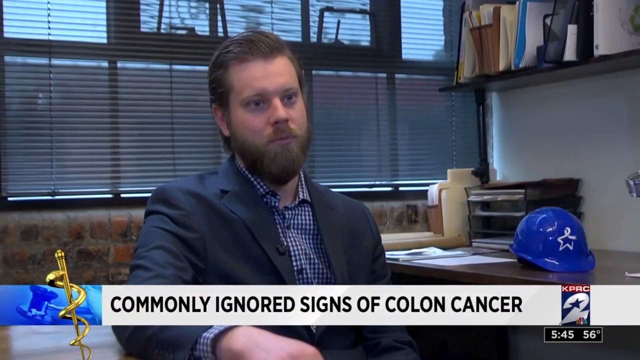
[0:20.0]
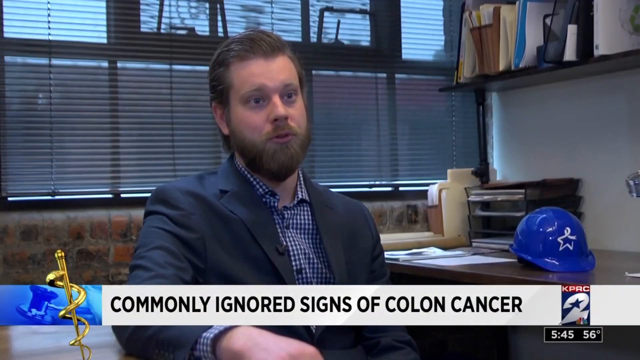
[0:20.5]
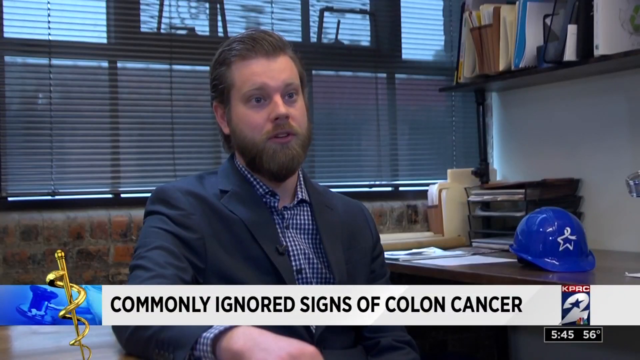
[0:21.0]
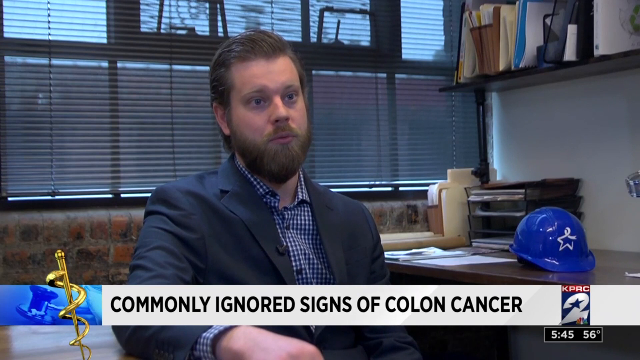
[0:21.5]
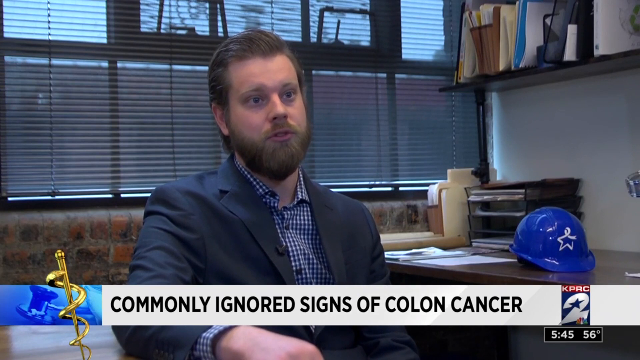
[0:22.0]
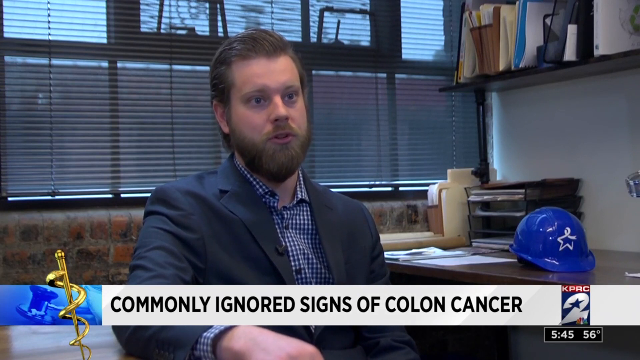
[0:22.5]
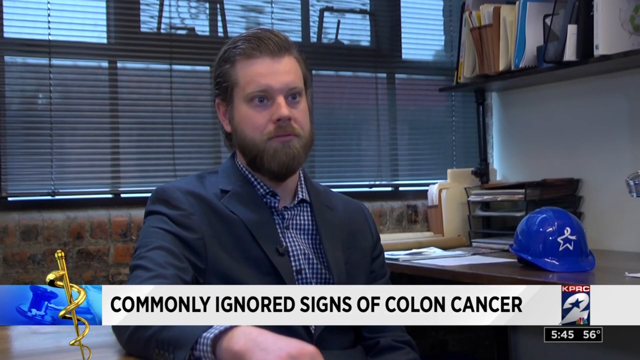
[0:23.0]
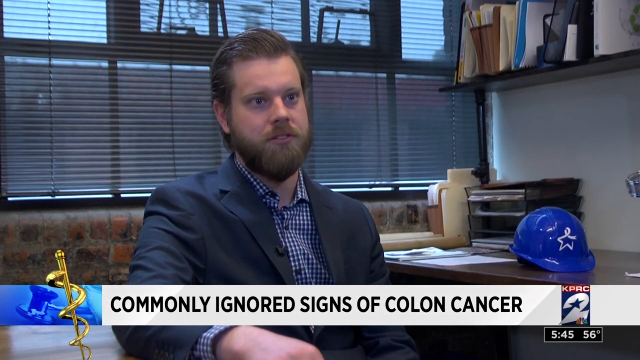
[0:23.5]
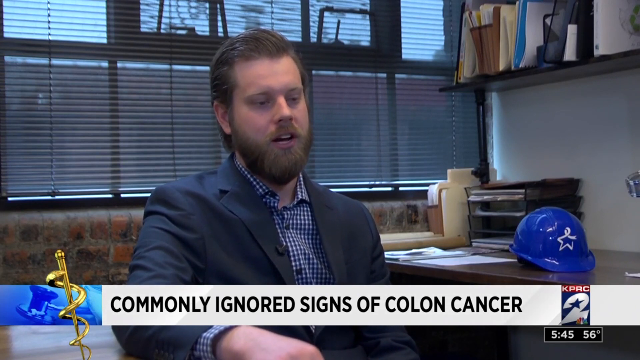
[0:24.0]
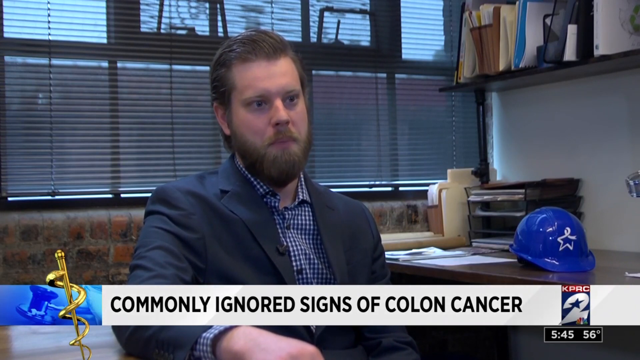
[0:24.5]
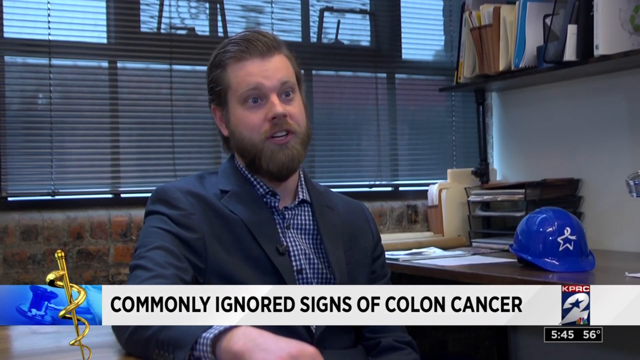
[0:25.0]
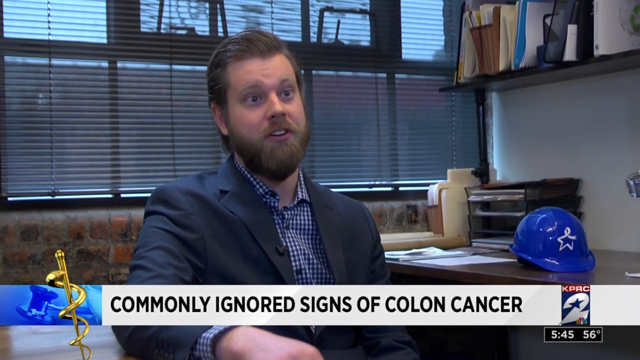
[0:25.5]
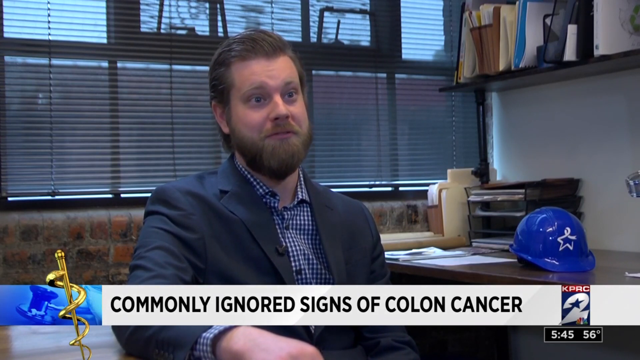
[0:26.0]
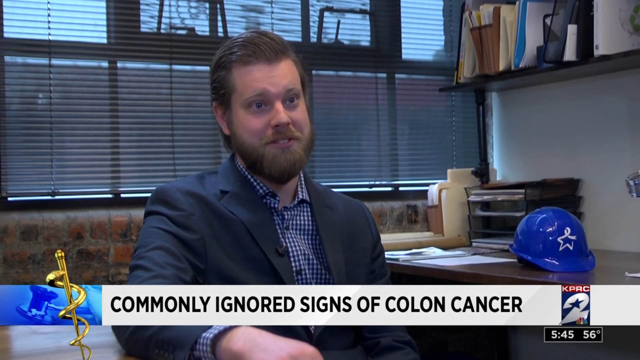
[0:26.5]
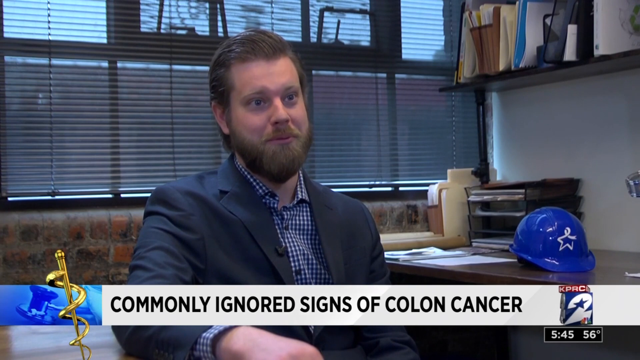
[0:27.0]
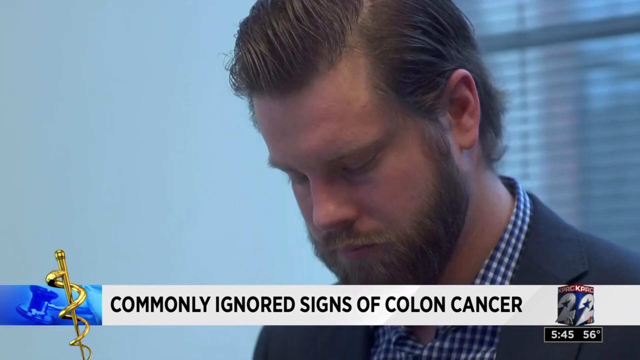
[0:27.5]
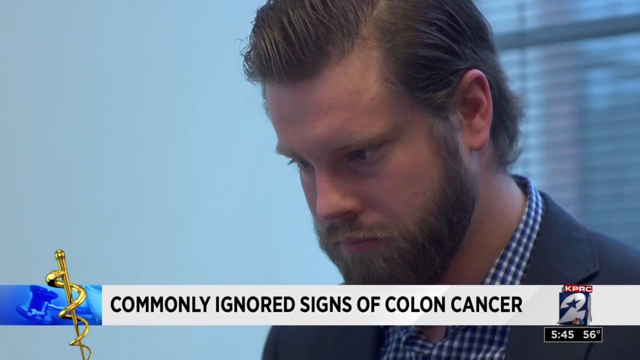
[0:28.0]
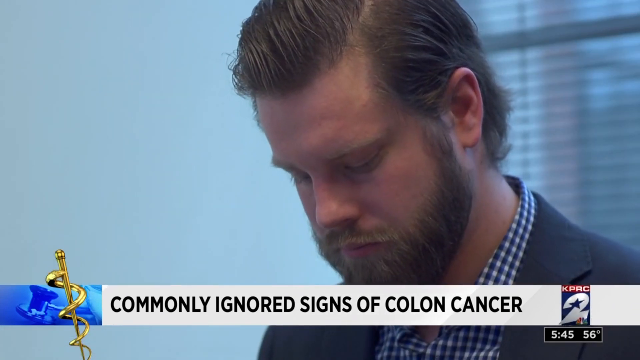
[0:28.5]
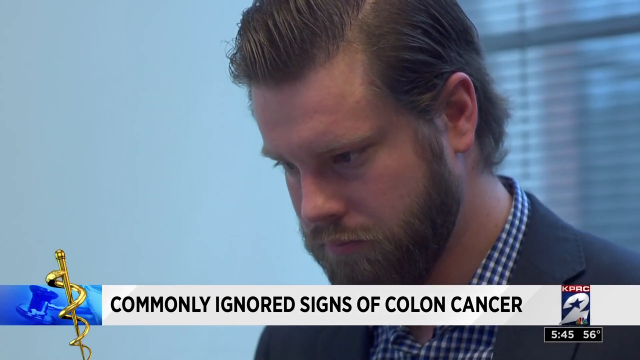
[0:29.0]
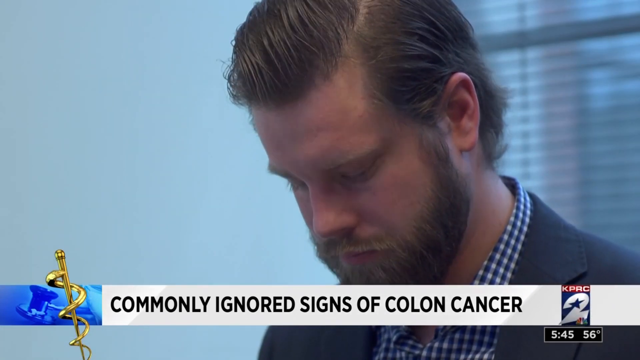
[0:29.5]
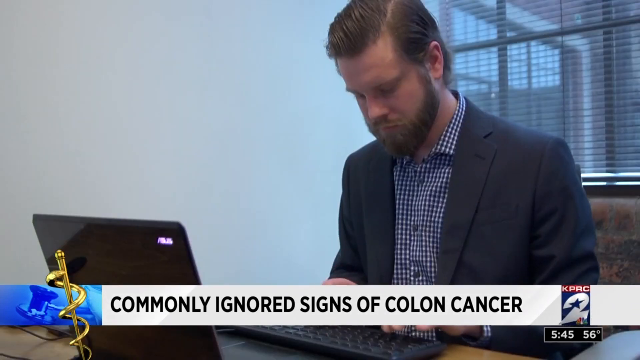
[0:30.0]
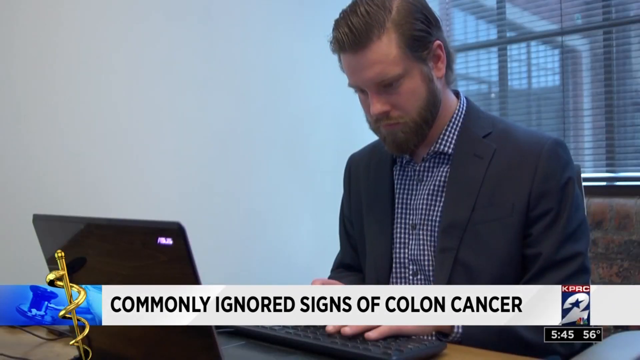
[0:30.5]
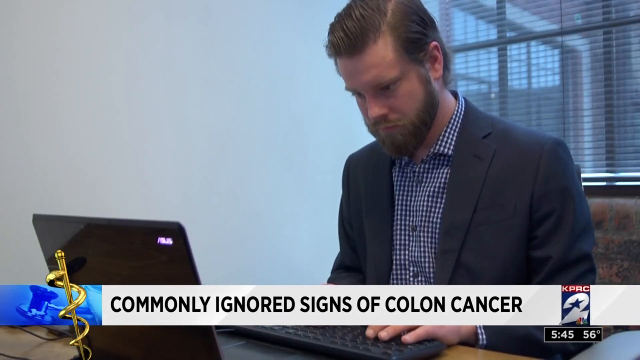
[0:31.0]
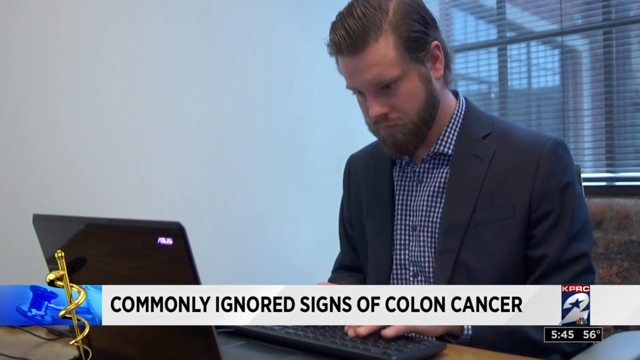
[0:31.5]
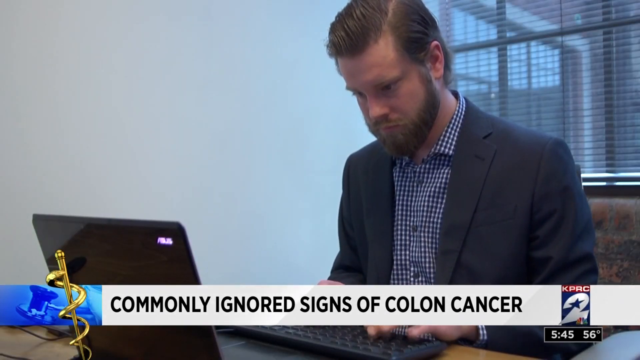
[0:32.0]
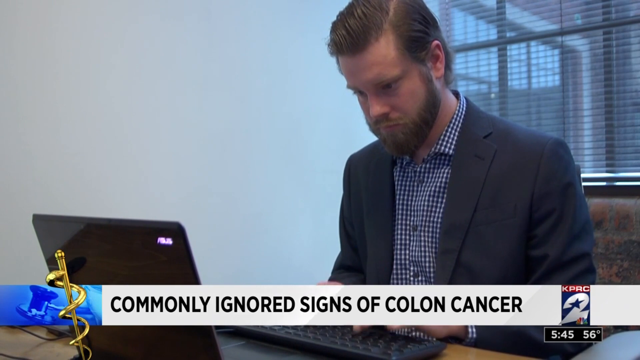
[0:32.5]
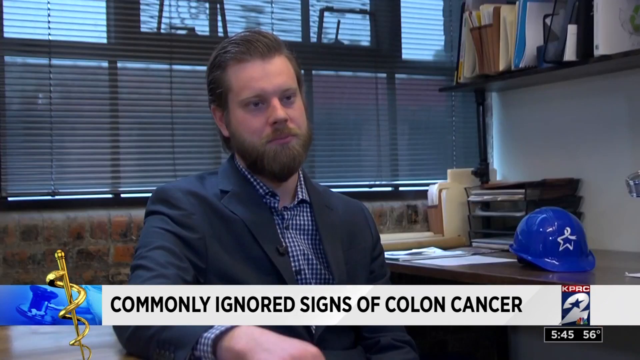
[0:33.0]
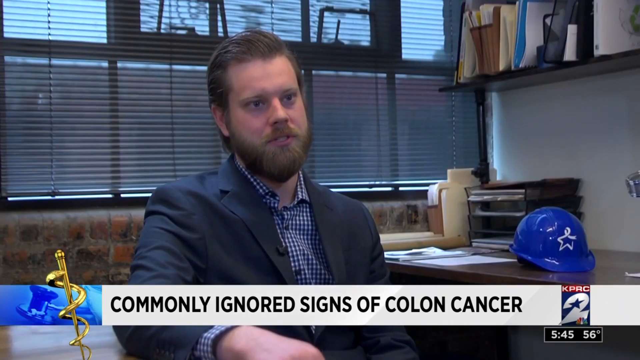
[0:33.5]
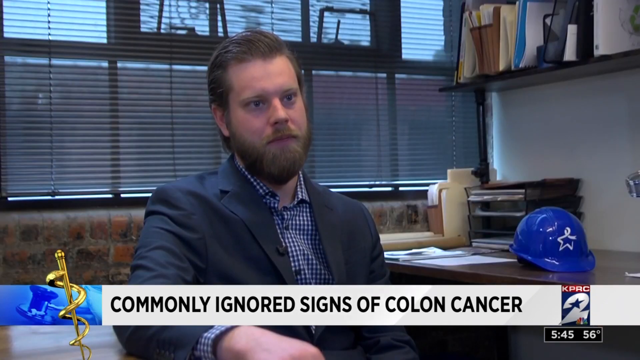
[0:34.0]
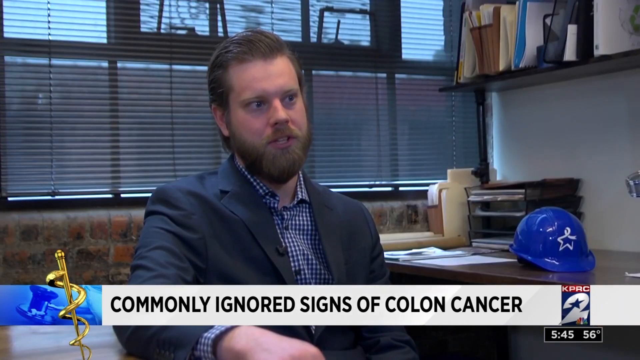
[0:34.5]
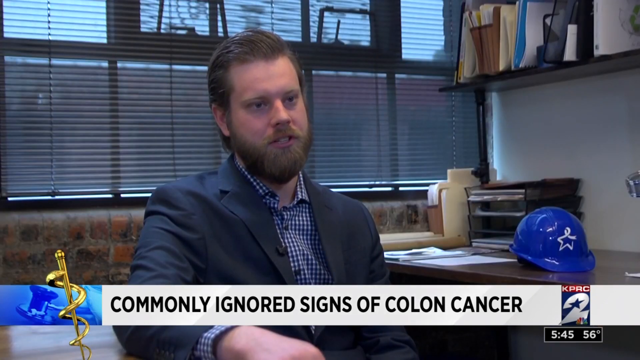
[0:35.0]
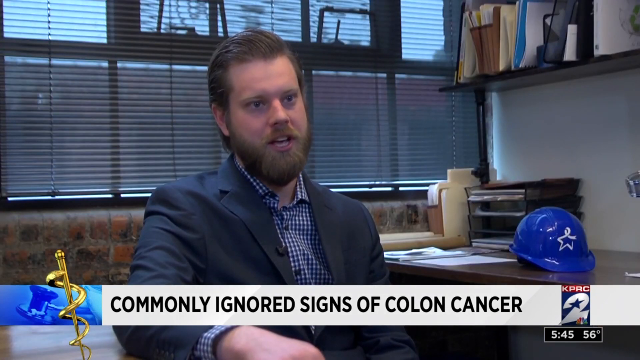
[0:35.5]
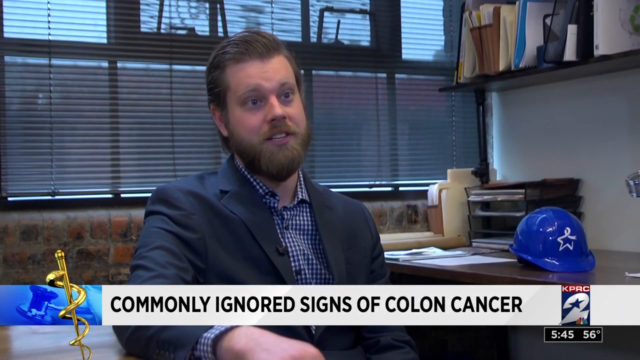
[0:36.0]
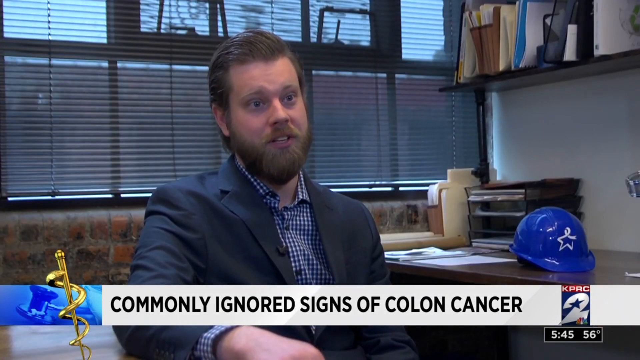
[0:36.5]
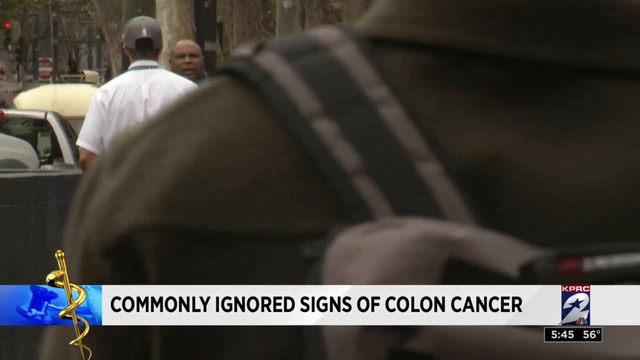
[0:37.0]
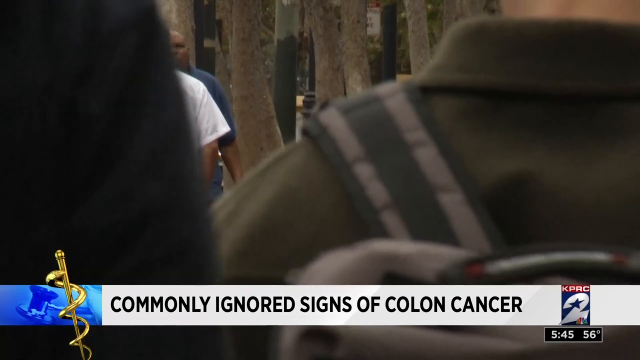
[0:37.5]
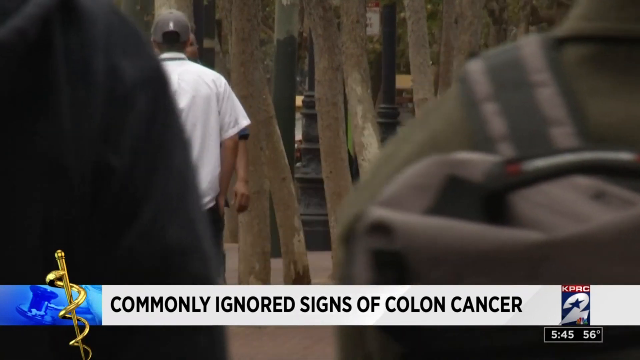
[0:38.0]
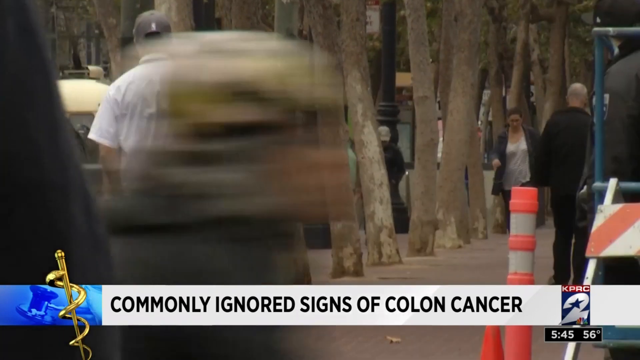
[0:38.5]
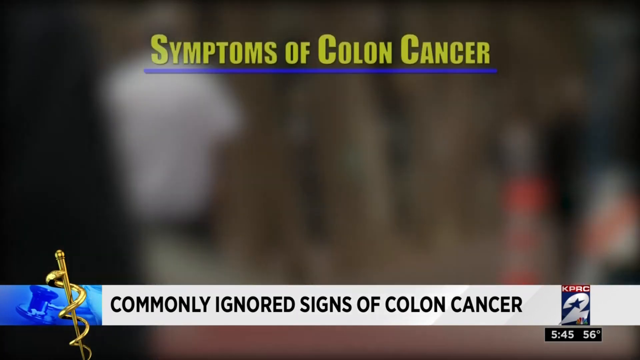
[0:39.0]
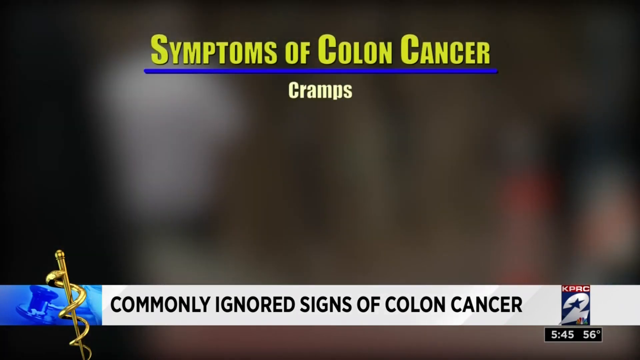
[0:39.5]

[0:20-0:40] The KPRC Channel 2 News video from Houston, TX shows text at the bottom of the screen reading "commonly ignored signs of colon cancer". A Caucasian man with dark hair, a beard and a mustache sits at a desk, wearing a grey jacket and a black and white checked shirt. To his right is a blue hard hat with a star on it, and above his desk is a shelf holding many folders. Behind him are blinds with blue sky visible, and there is a brick wall below the blinds. The man talks and shakes his head, with his right hand up. Another shot shows him typing on a laptop while he continues to talk and shake his head. Then people walk on the street, followed by text reading "symptoms of colon cancer, cramps".